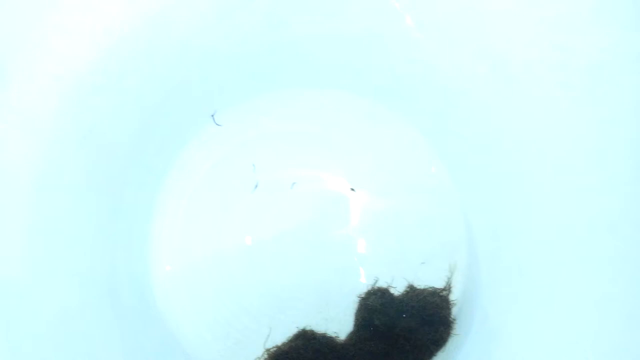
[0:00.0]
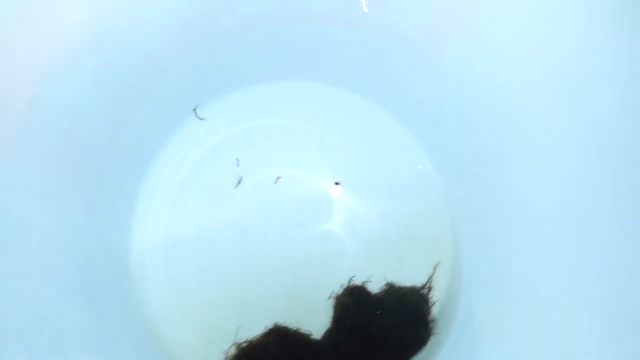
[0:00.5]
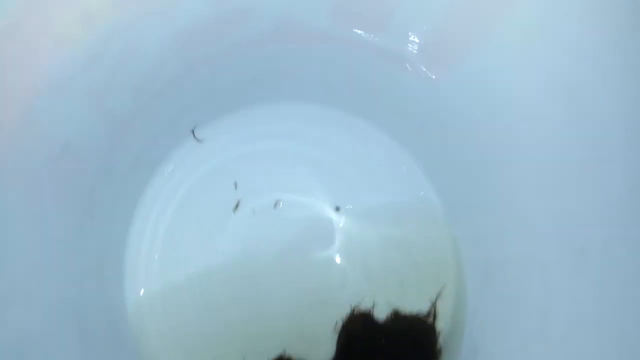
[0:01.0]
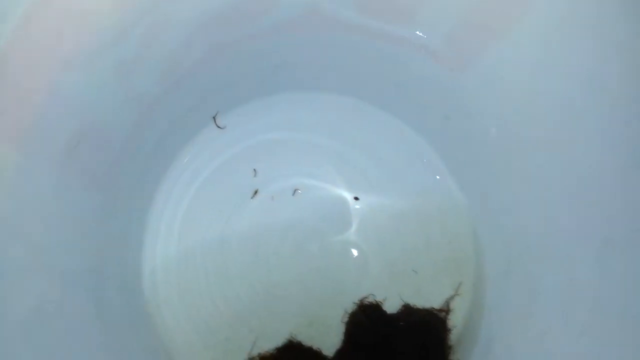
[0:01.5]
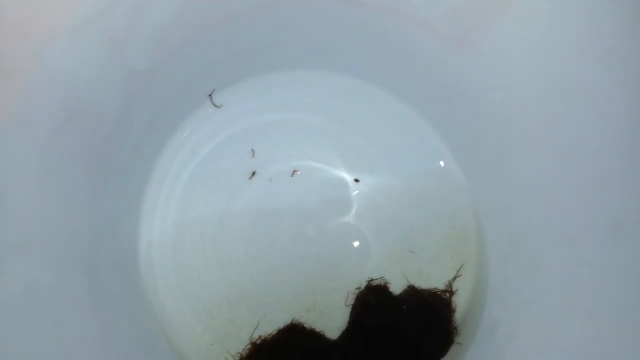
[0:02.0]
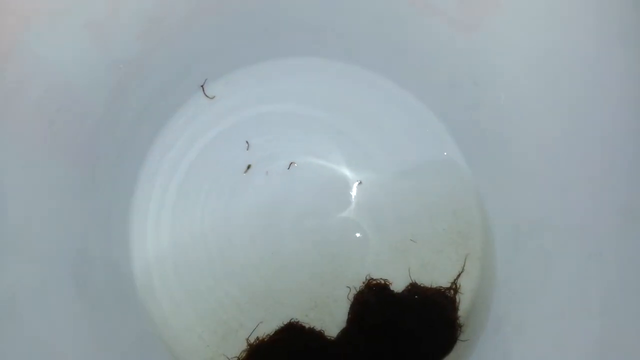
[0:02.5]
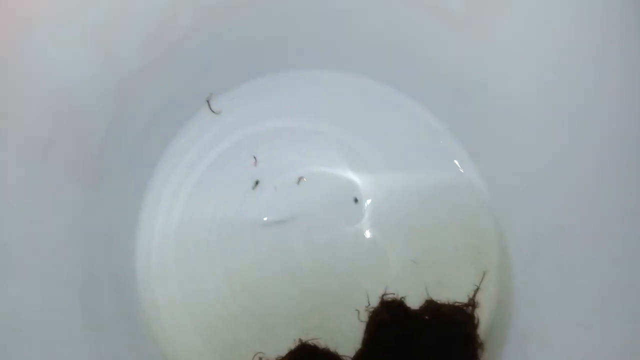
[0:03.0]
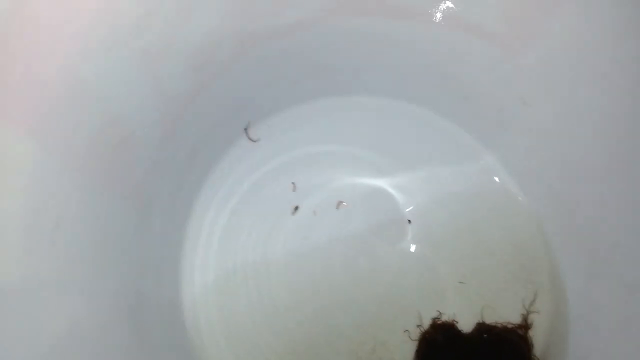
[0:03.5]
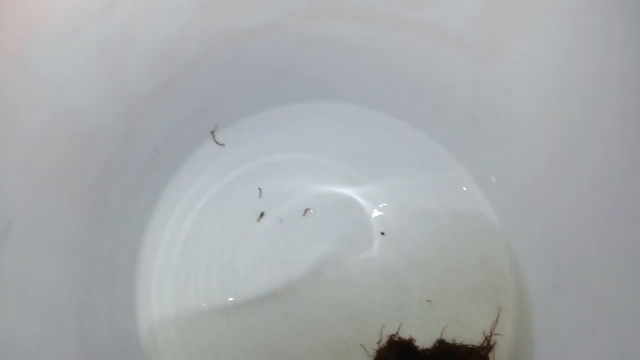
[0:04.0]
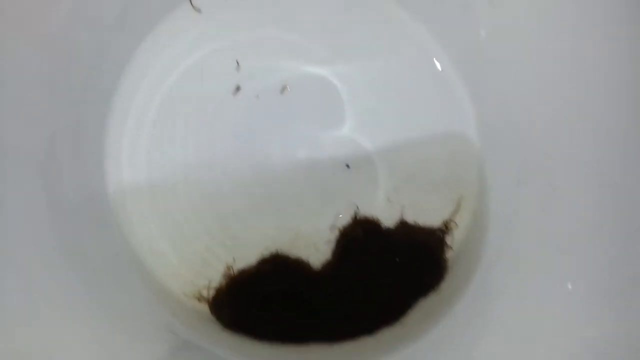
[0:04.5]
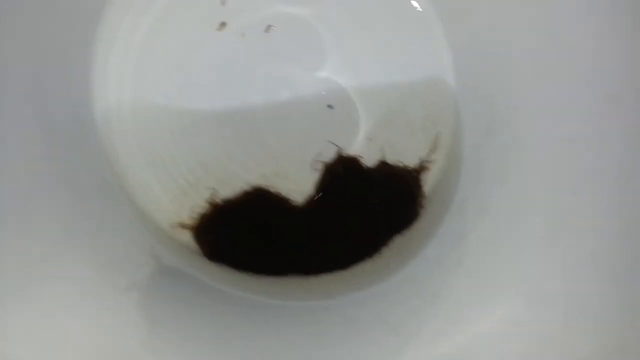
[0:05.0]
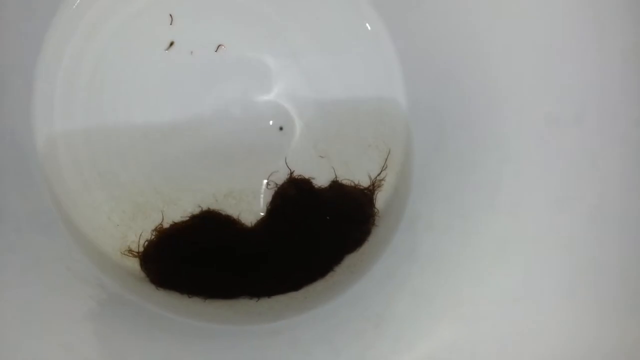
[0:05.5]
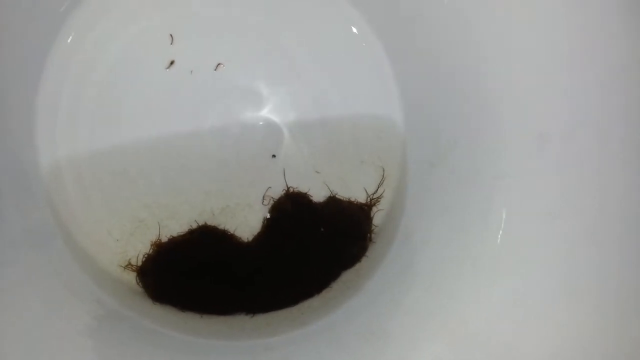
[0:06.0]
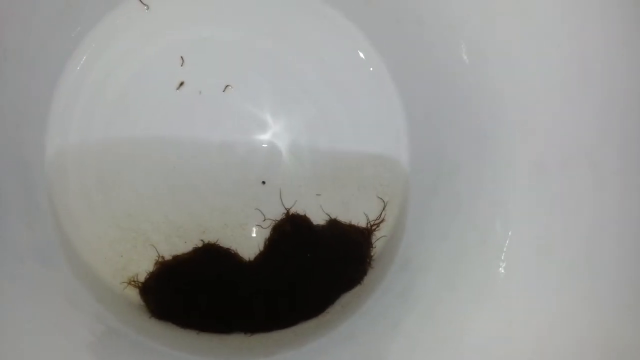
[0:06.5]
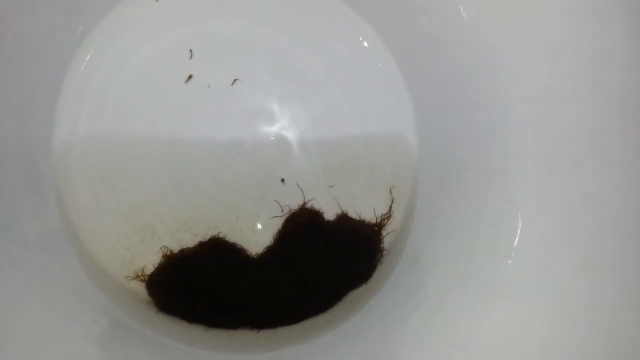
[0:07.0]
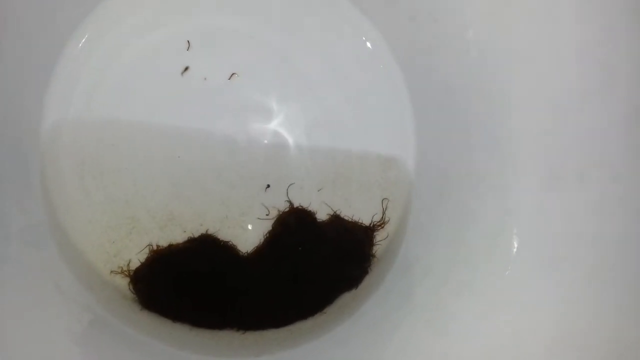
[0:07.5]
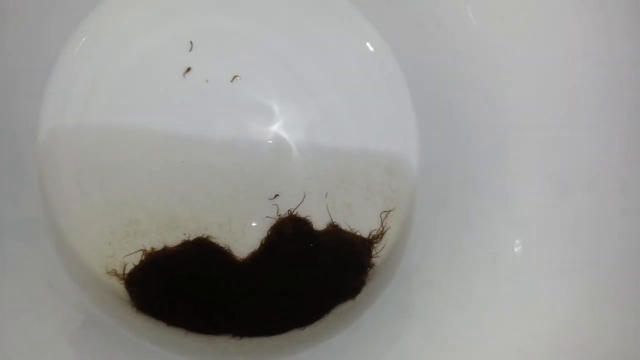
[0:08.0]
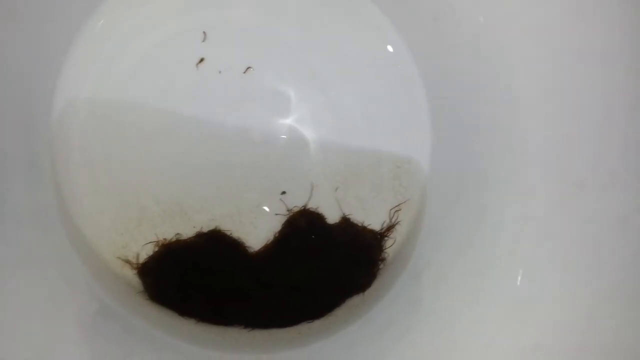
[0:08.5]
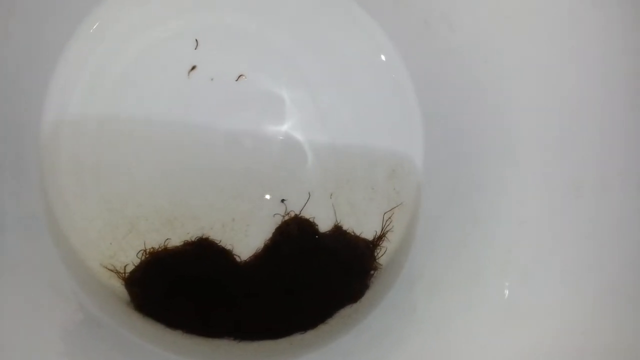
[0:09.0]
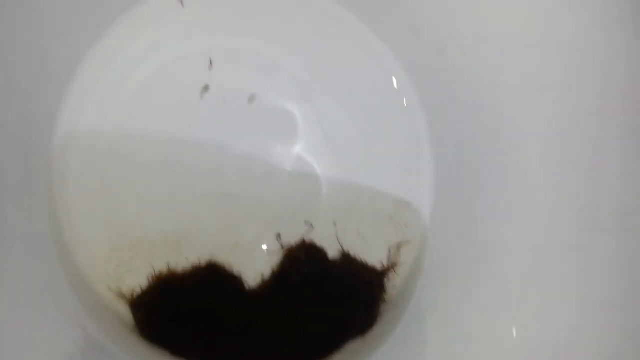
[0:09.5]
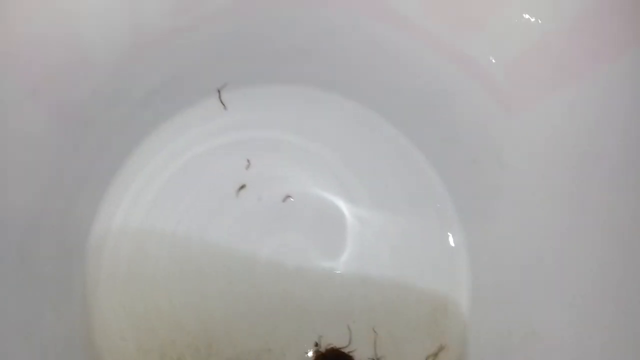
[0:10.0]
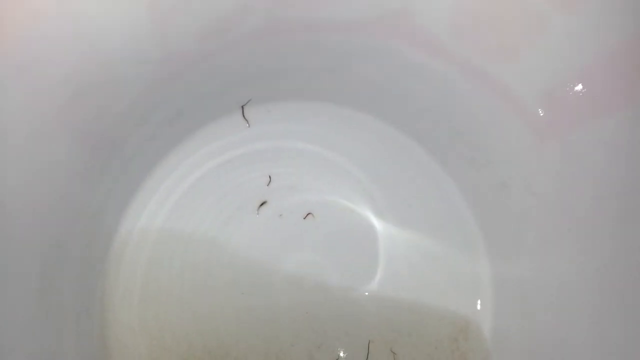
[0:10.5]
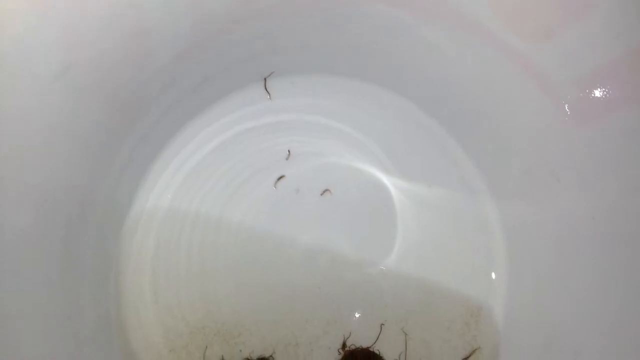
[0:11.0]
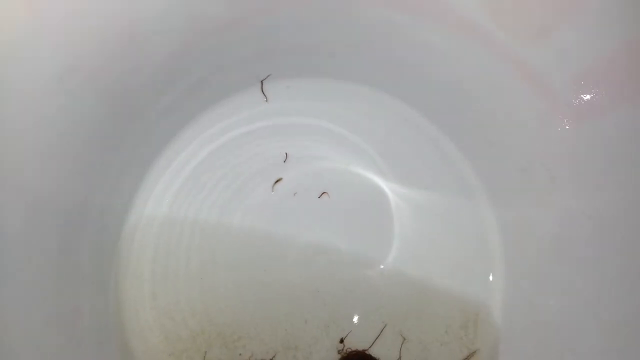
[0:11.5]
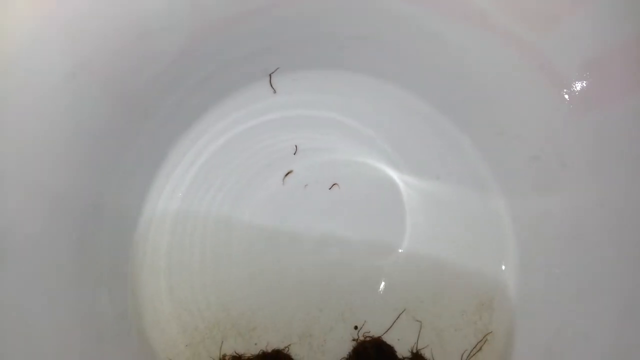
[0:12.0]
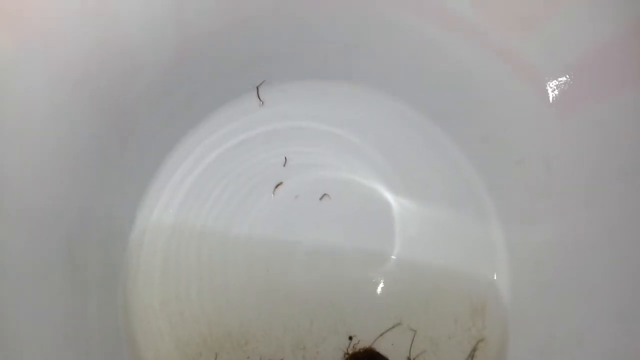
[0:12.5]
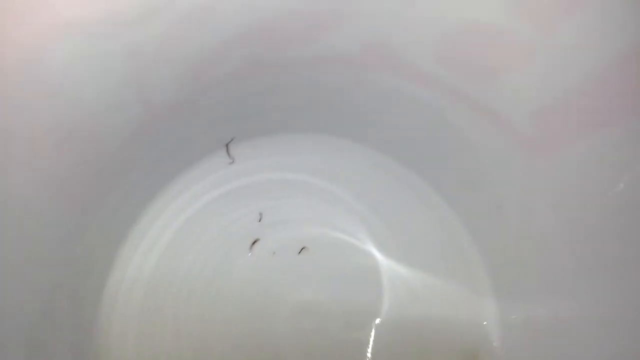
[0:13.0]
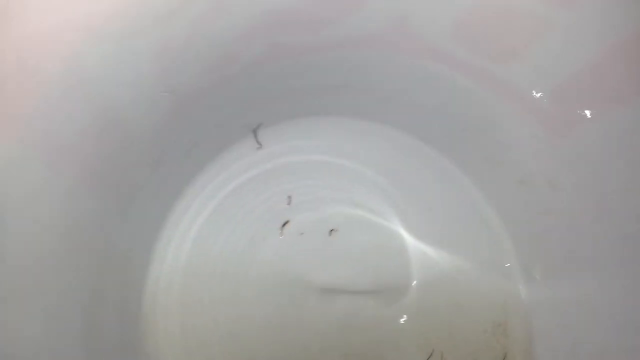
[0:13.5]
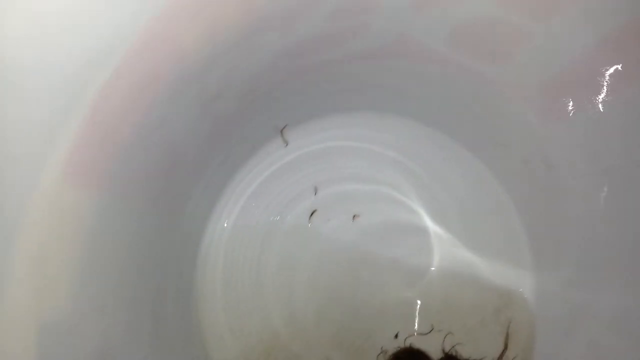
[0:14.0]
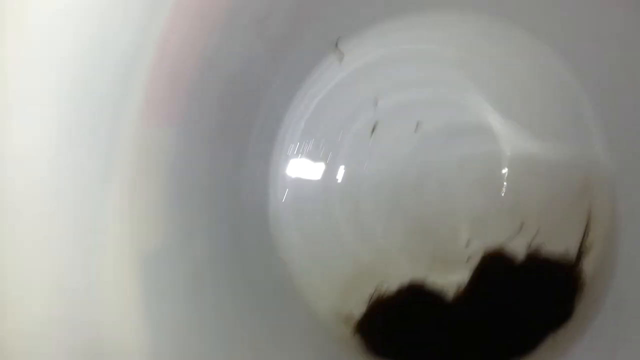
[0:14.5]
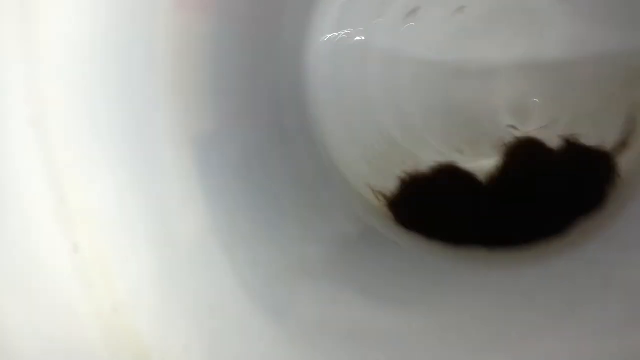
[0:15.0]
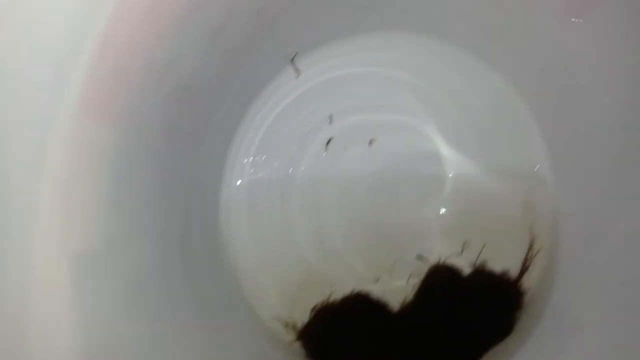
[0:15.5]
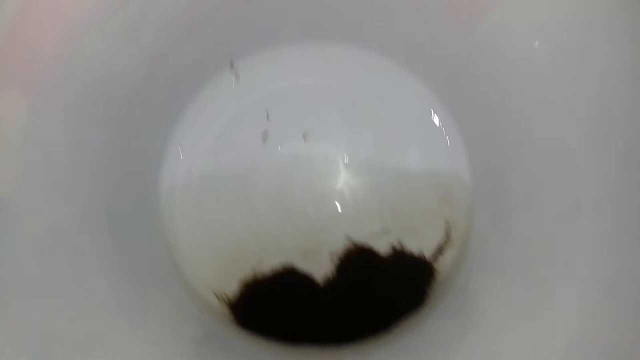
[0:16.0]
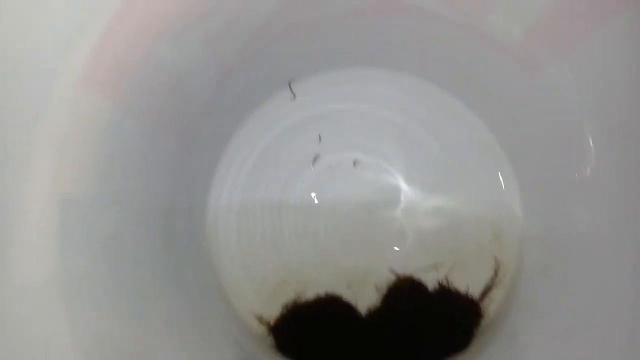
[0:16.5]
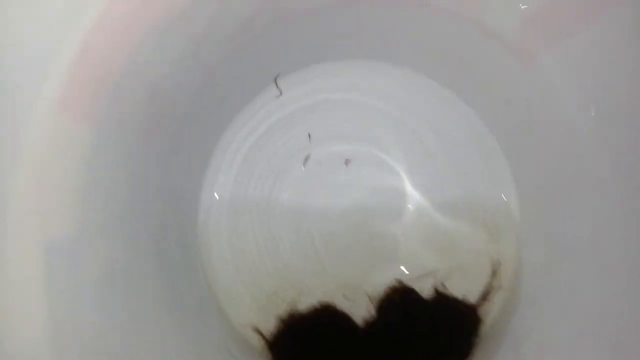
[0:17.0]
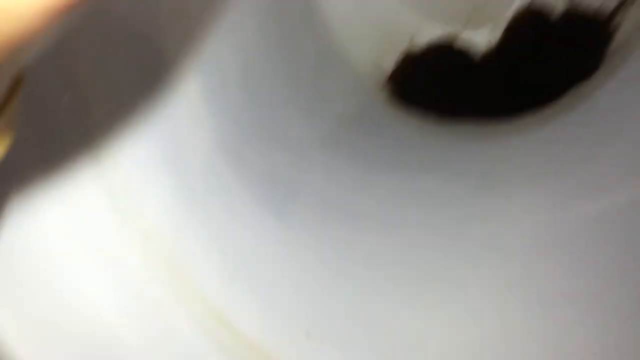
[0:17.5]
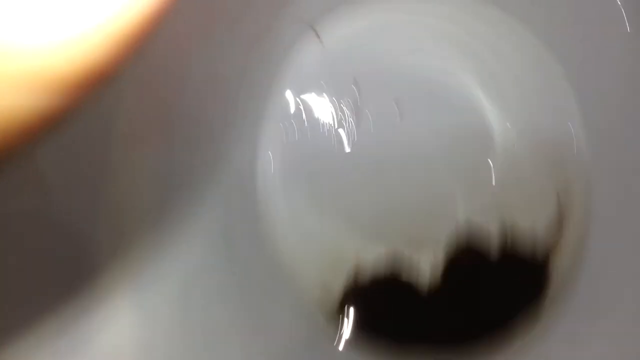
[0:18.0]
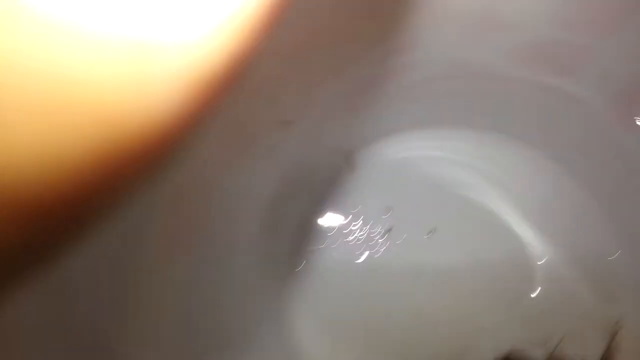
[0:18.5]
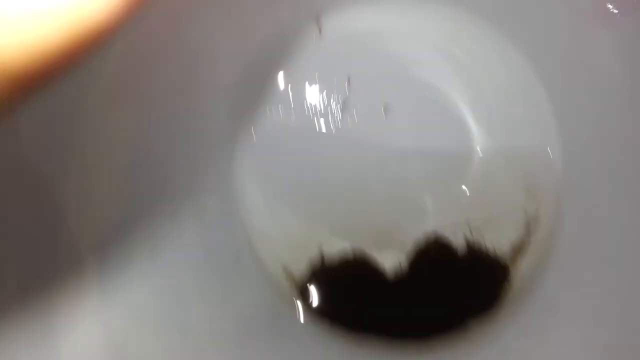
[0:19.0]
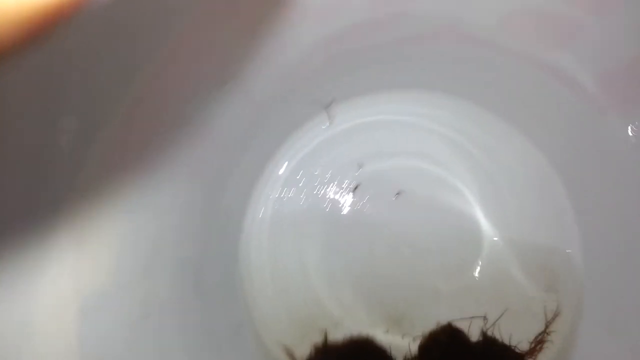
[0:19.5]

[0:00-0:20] The inside of a small white cup is shown, with white walls. At its base there is water and some sort of algae plant. The water level is low, and the cup is tilted slightly, so the water collects toward the bottom. The algae-like substance in the water is a bit dark in colour, and the water is a bit dirty as well. The cup is held with a left hand, and some of the fingers are visible on the left side of the frame. Residues of the algae-like substance are on the upper part of the cup, above the water level.